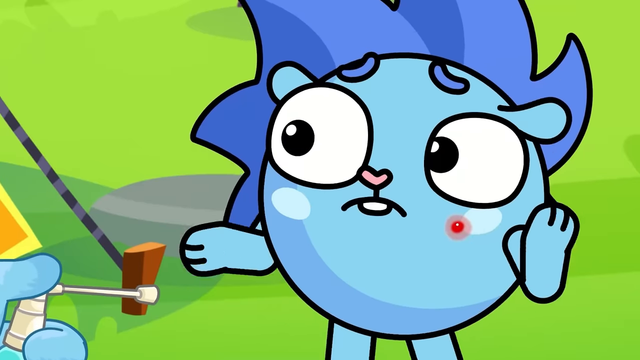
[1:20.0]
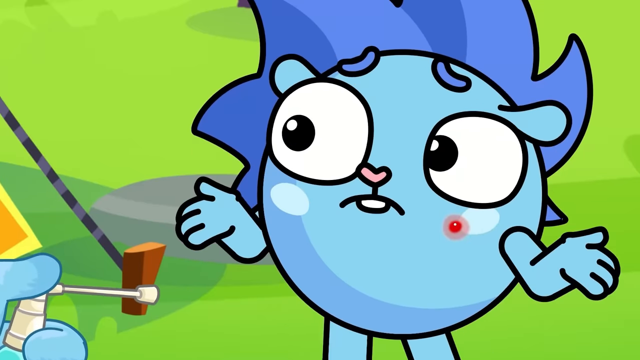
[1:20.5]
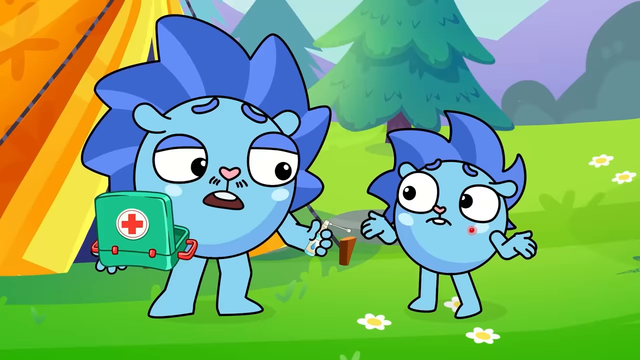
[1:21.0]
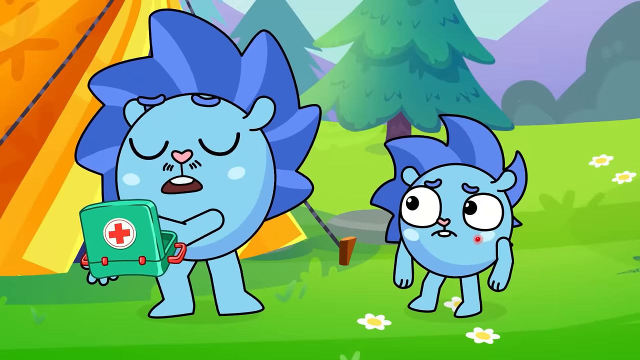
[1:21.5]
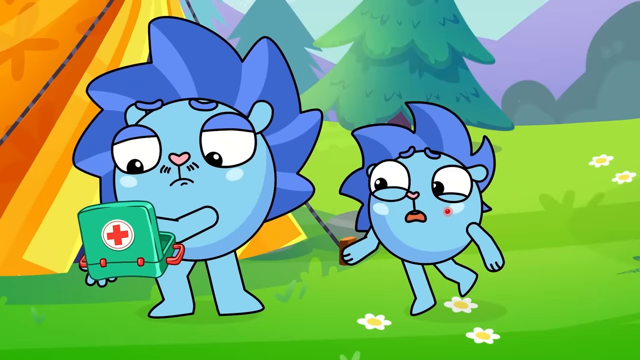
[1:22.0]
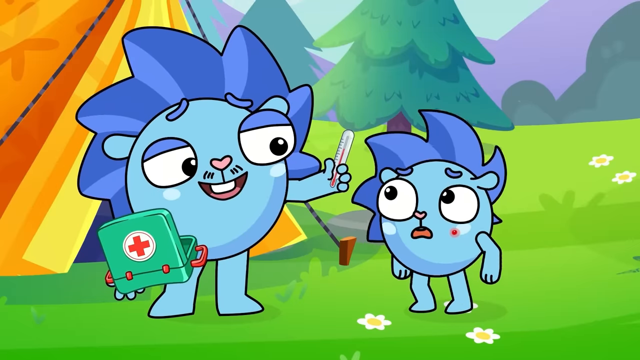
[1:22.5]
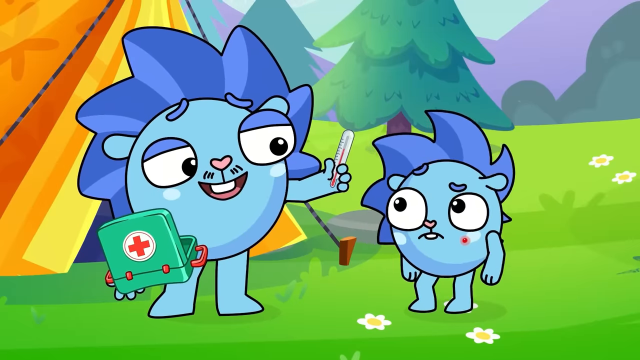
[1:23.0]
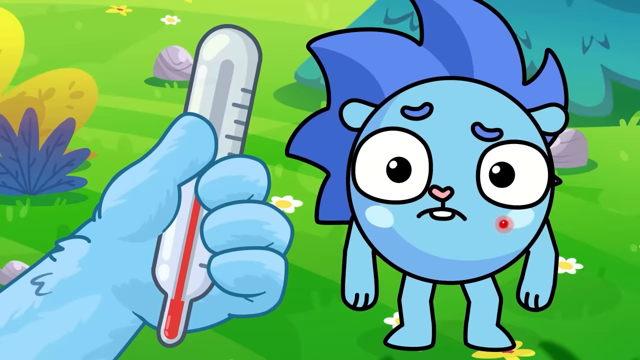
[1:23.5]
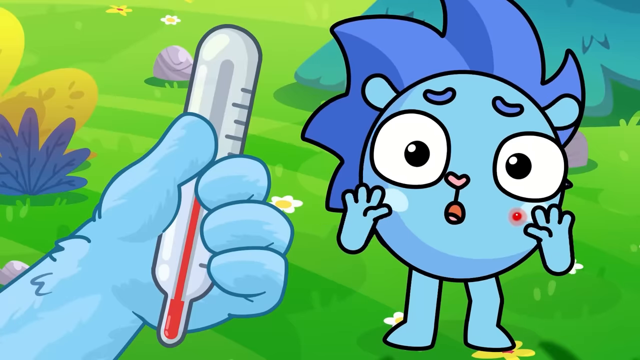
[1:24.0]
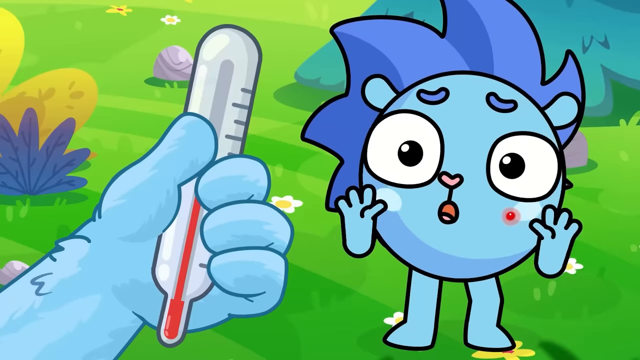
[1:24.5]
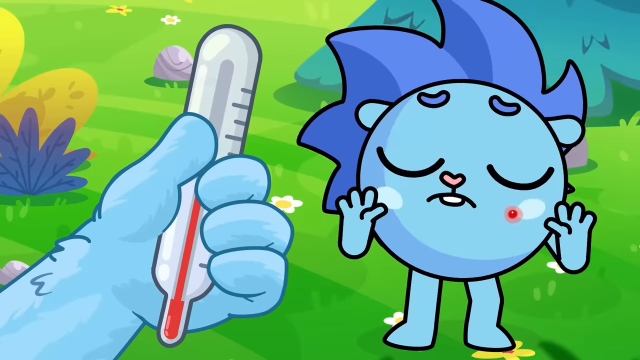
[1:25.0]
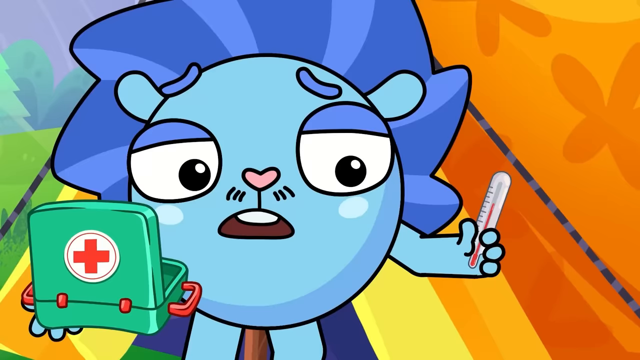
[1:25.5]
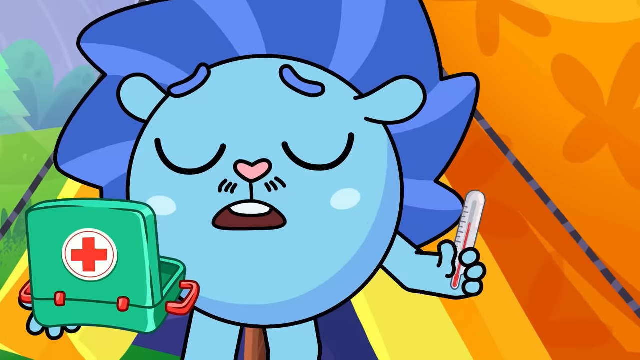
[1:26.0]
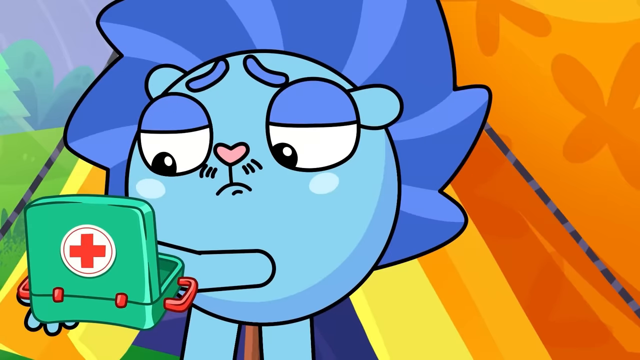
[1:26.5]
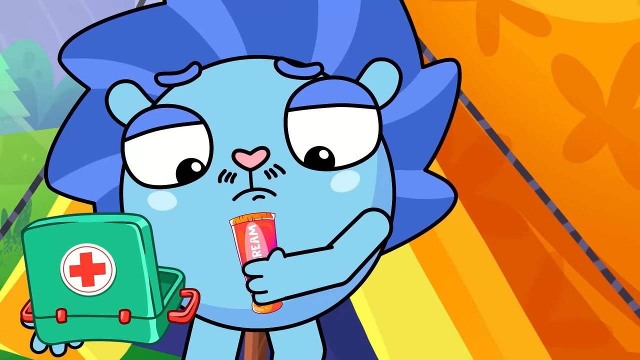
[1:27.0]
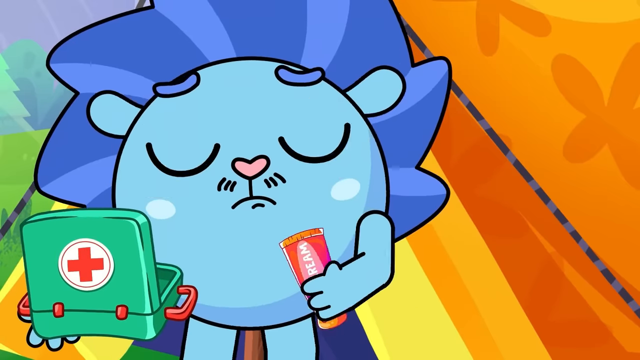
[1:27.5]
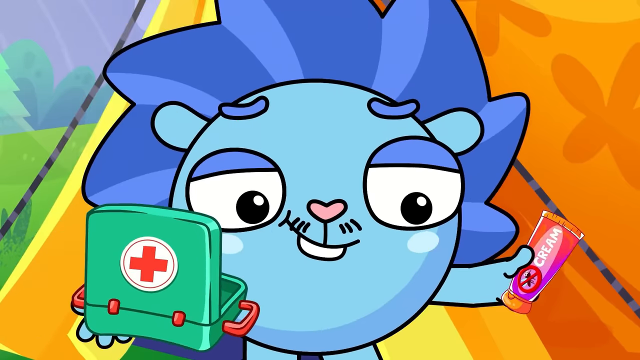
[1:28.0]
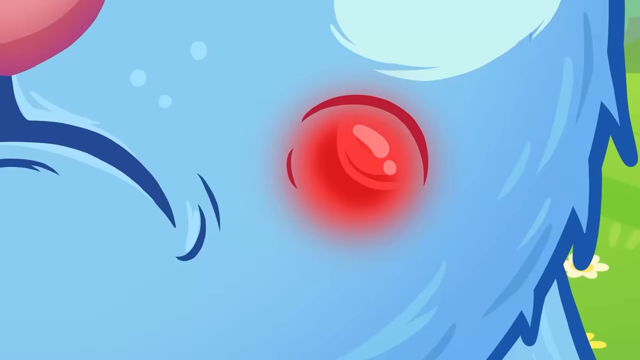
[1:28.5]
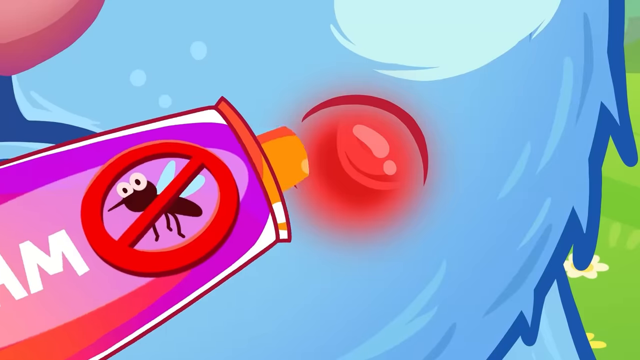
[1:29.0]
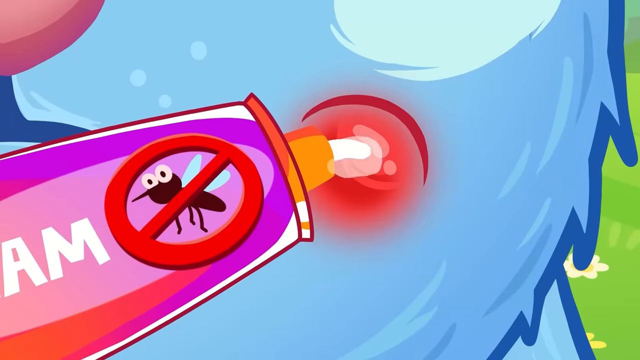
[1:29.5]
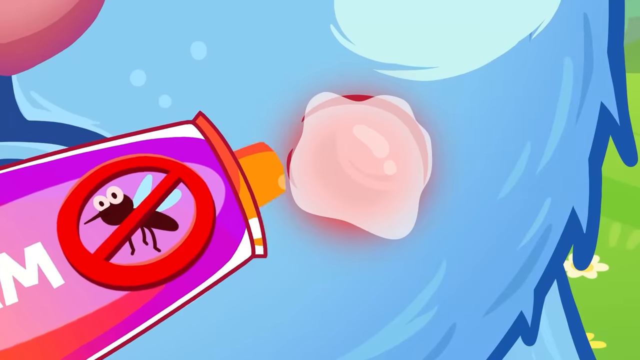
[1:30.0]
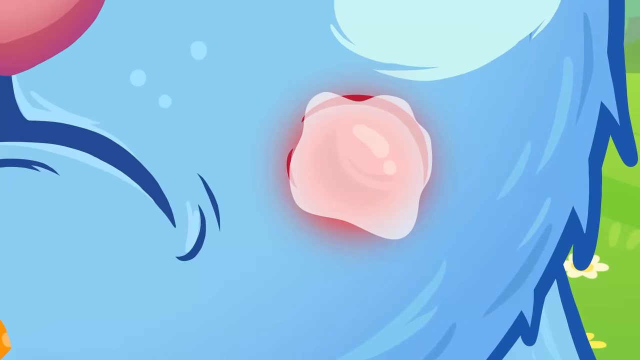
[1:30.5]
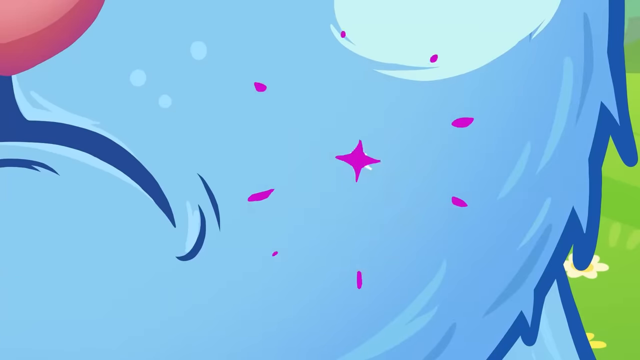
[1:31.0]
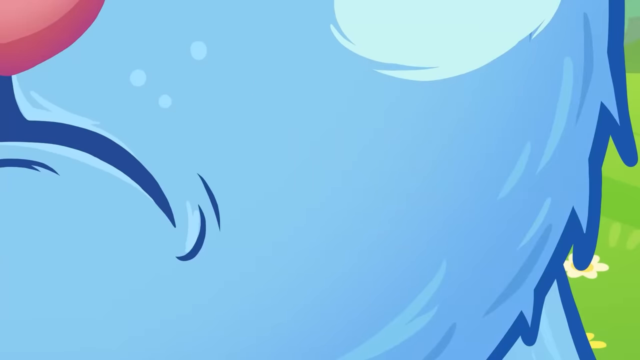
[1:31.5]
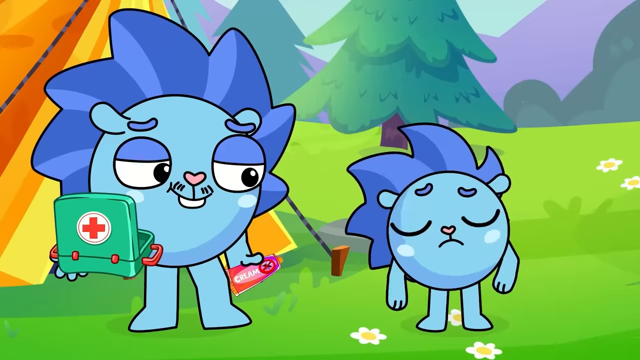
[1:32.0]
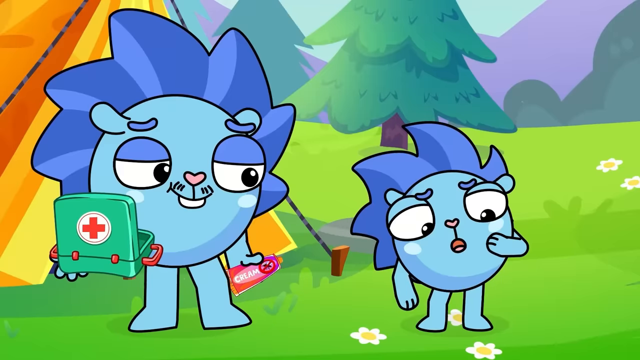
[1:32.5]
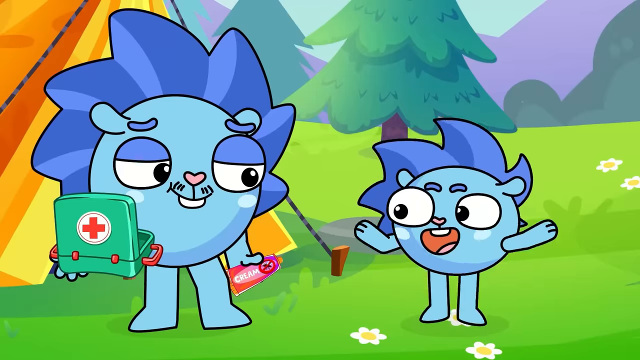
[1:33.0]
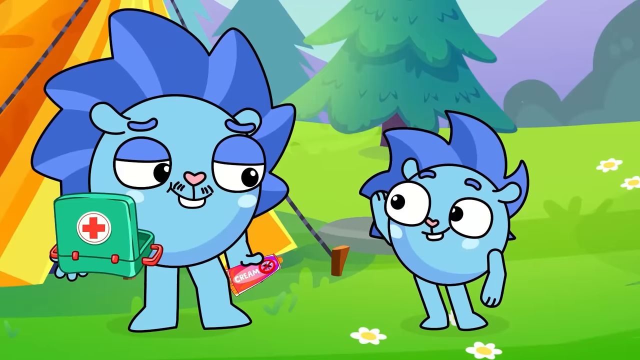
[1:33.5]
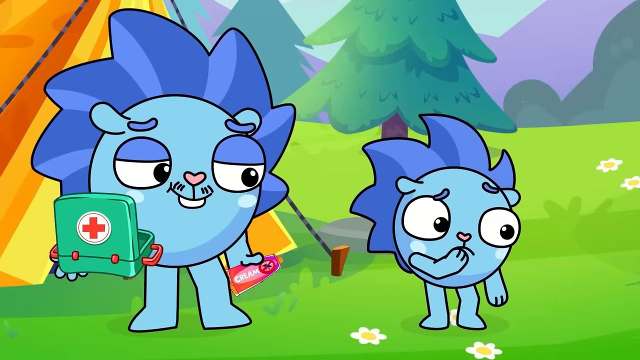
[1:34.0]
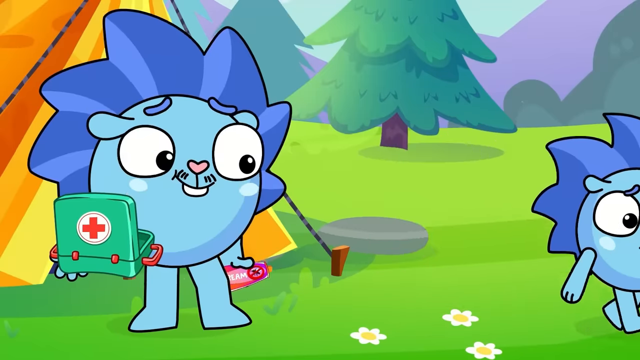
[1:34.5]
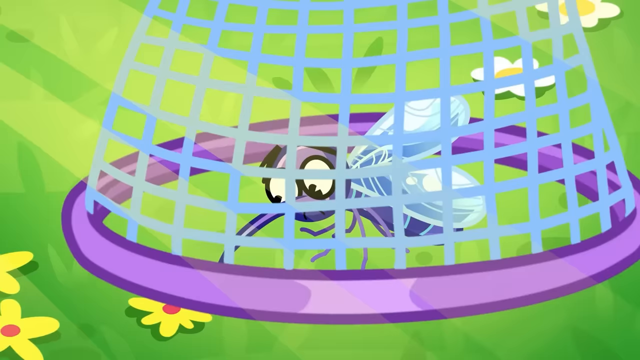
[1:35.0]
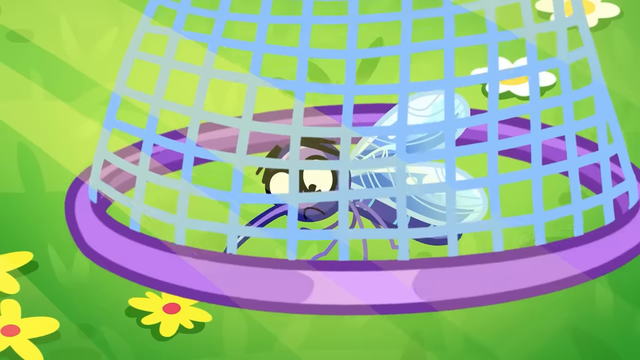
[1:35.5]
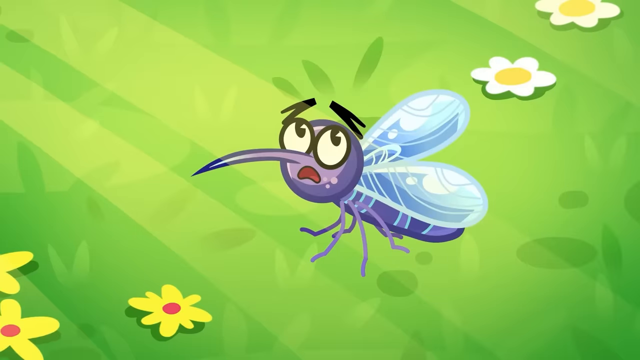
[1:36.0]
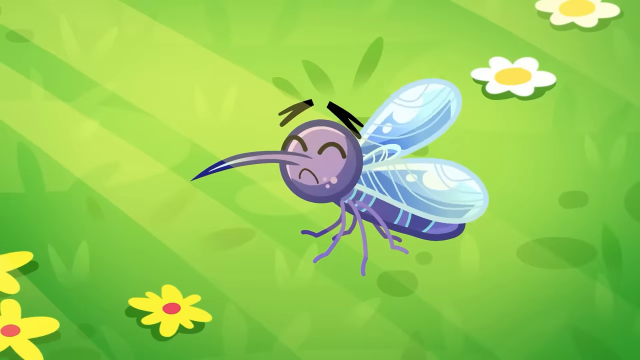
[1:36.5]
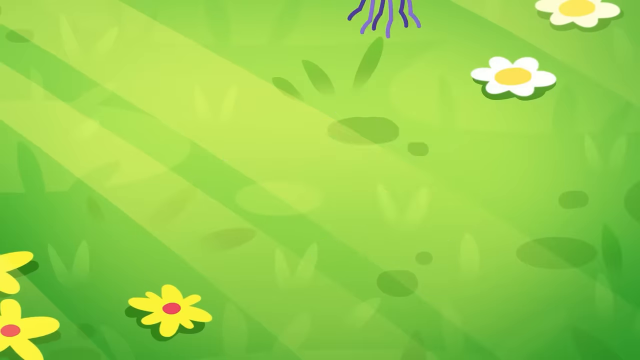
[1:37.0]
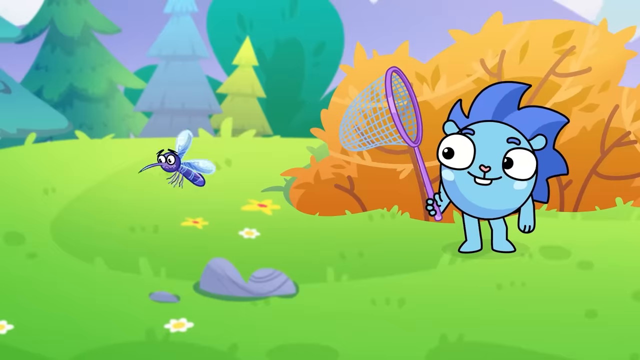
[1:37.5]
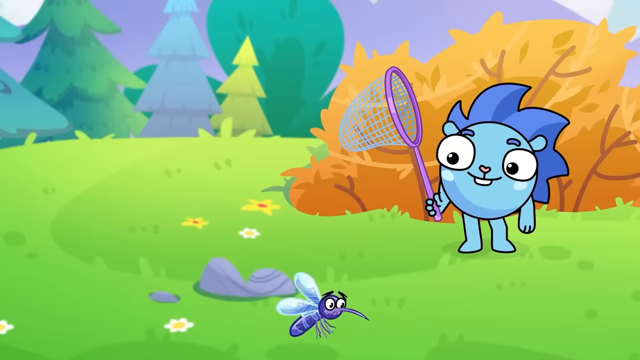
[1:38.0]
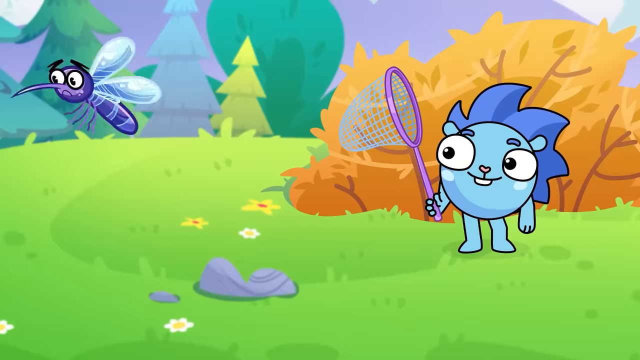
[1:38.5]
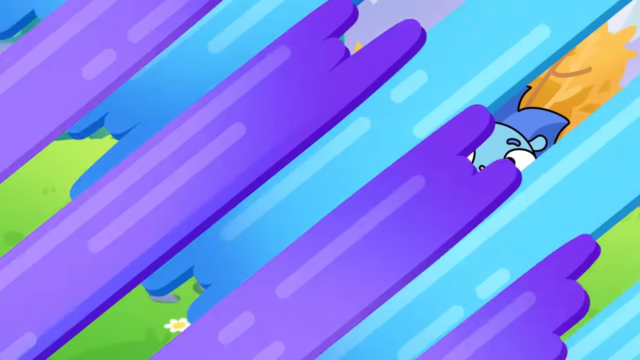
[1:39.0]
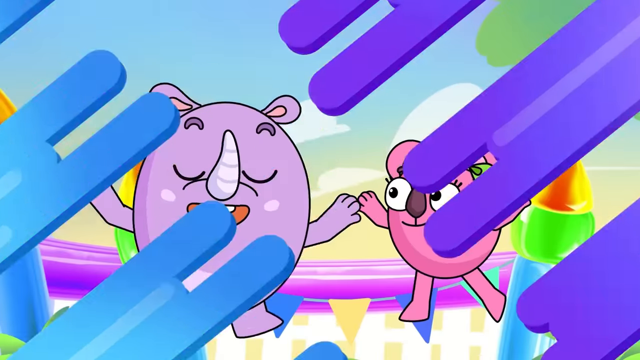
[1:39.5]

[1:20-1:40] A character has blue eyebrows, a white eye, and a red dot on his face and hands. The father appears to be attempting to spray something, but the creature says no, that is not the item he requires. The father then holds out a thermometer he pulled out of a green medical kit with a red cross on its front. Behind him is a yellow tent with rope, the sky is blue, and in the back there appear to be buttons. The view closes up on the thermometer, with blue leaves, a yellow flower, a green plant and what appear to be flowers on the ground. The creature says no, he does not require that, jumps up and runs over to the mosquito, which is flying around. The scene transitions to children bouncing on a pink and blue bouncy house.